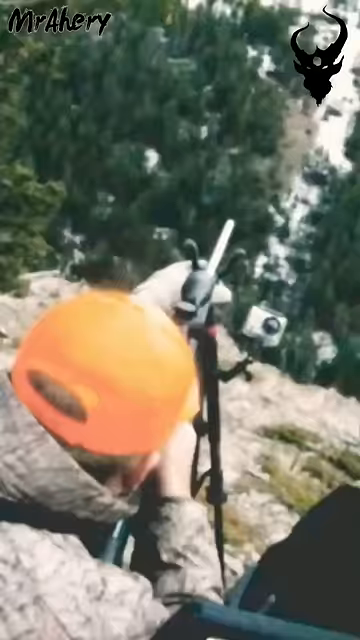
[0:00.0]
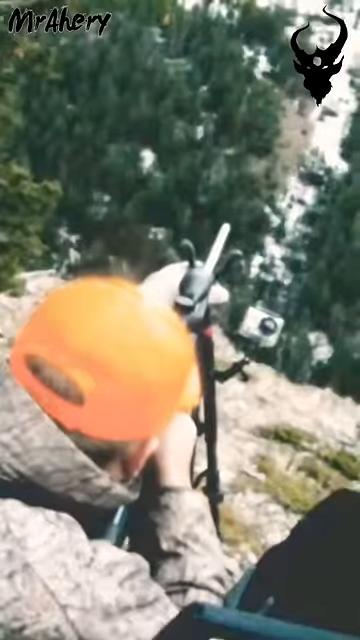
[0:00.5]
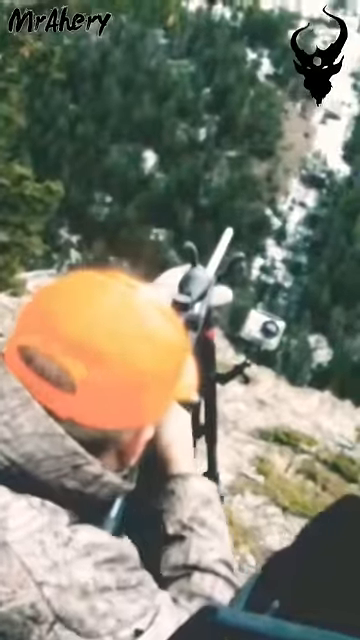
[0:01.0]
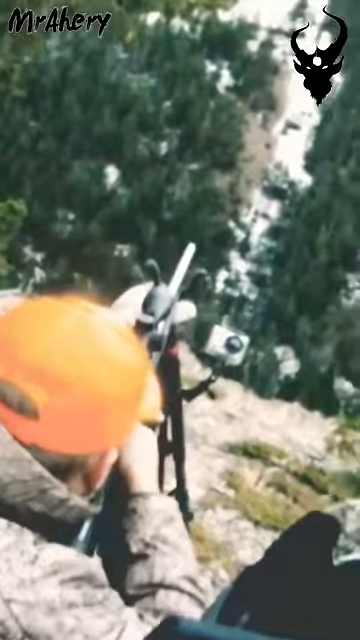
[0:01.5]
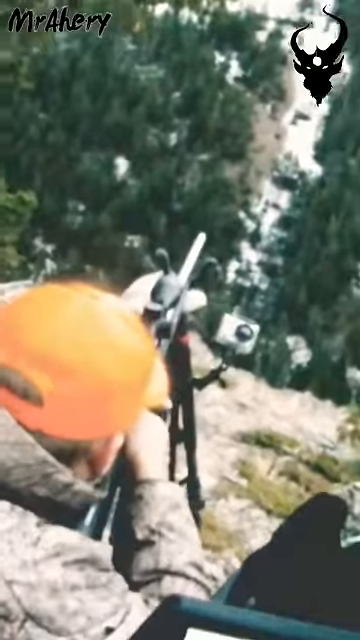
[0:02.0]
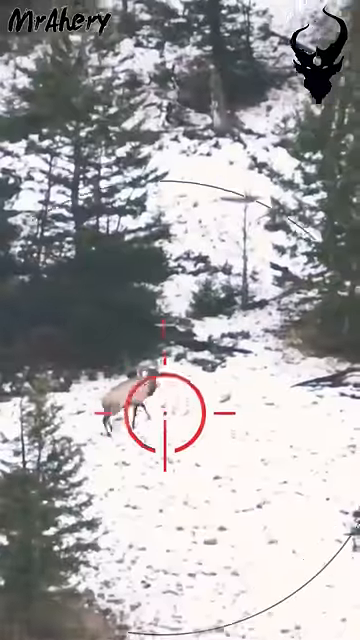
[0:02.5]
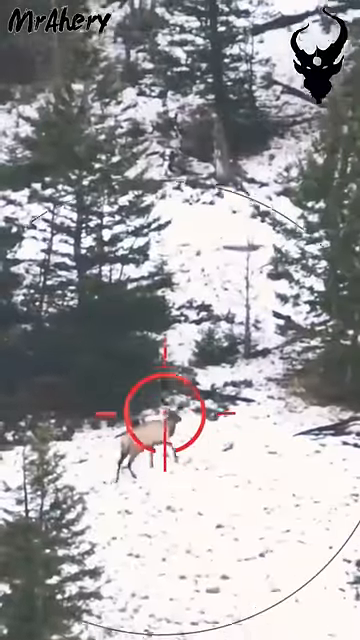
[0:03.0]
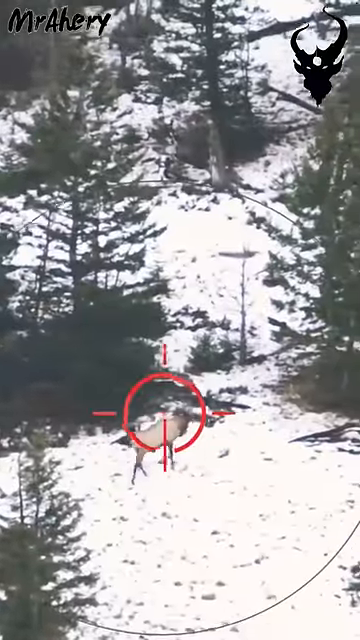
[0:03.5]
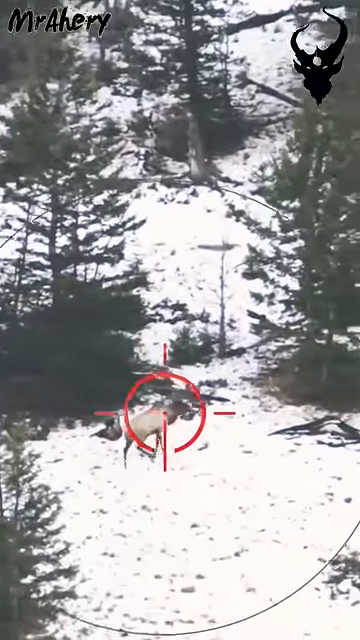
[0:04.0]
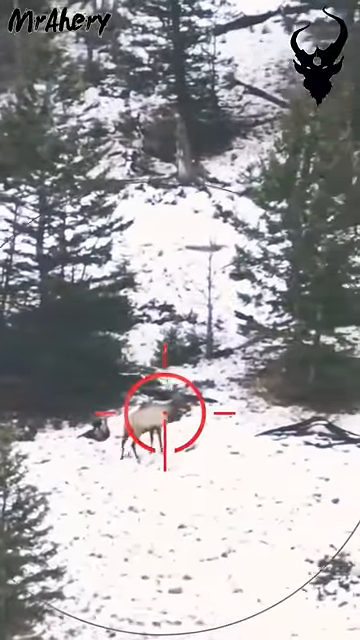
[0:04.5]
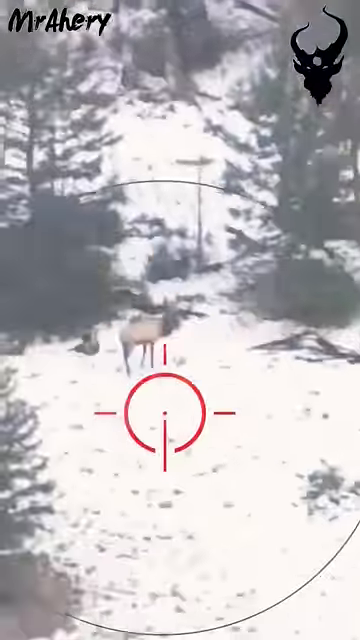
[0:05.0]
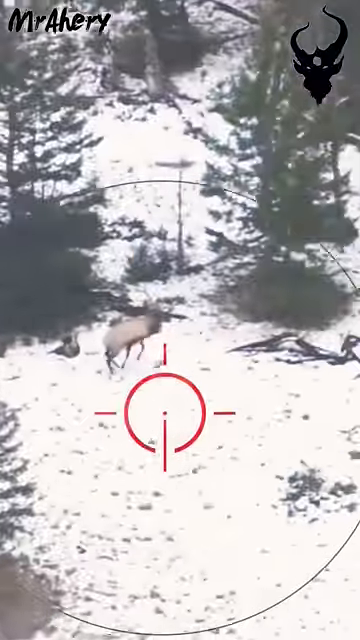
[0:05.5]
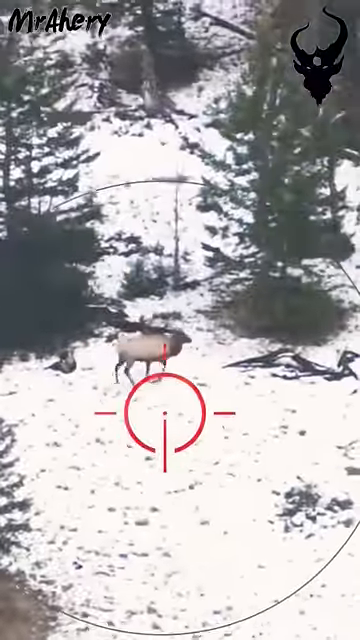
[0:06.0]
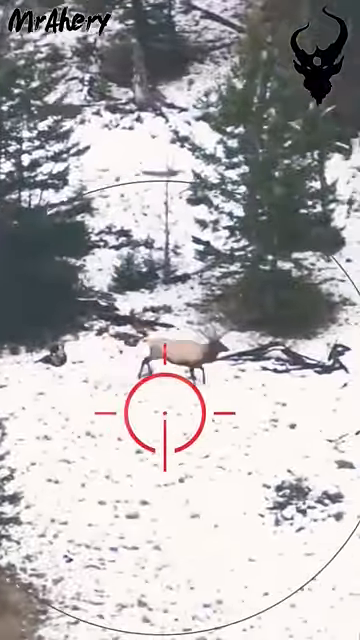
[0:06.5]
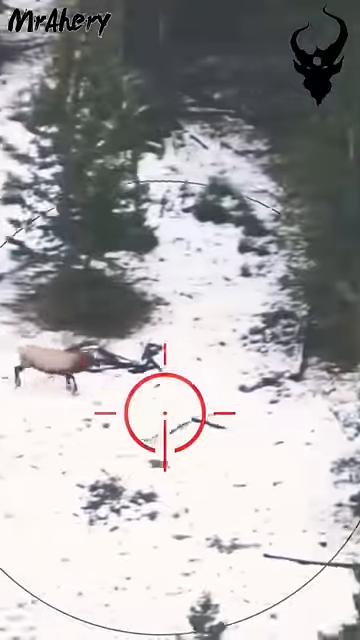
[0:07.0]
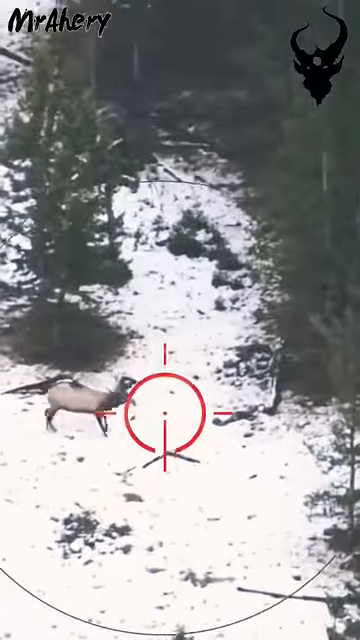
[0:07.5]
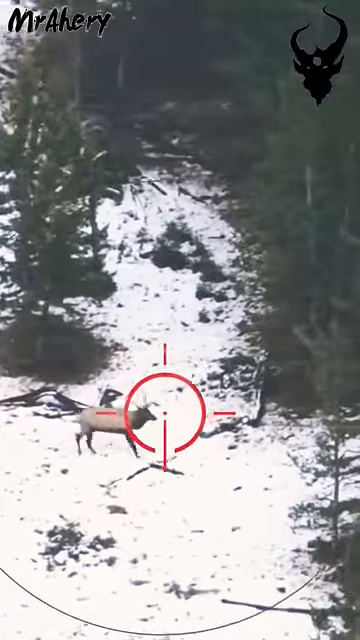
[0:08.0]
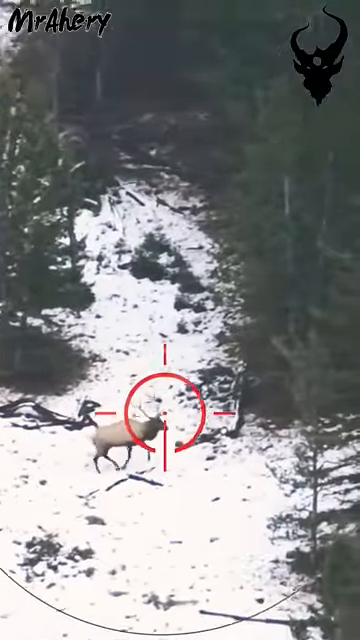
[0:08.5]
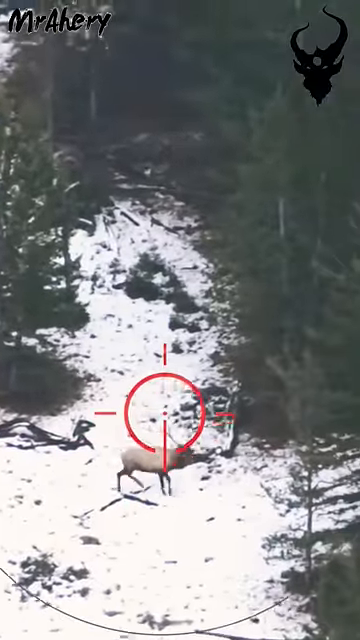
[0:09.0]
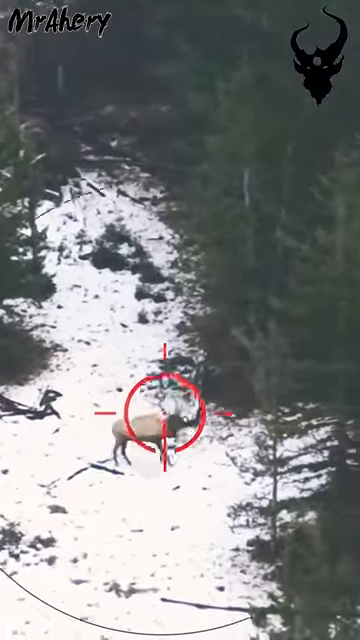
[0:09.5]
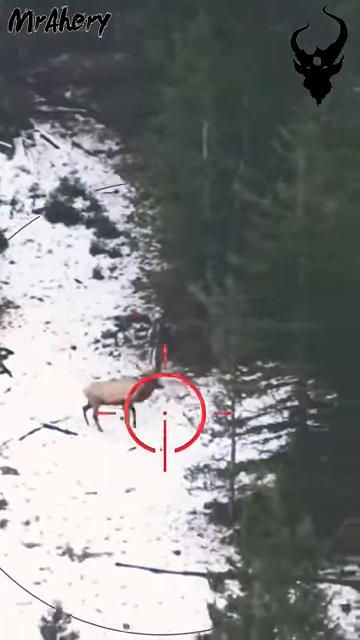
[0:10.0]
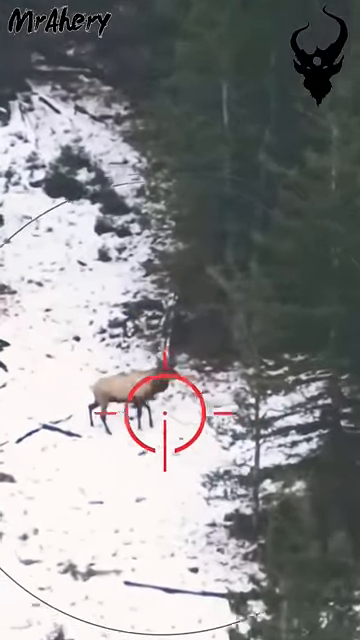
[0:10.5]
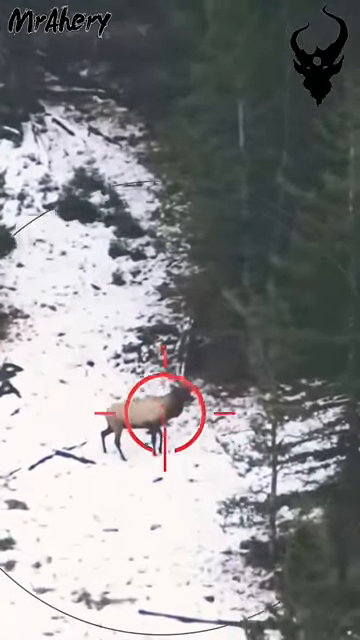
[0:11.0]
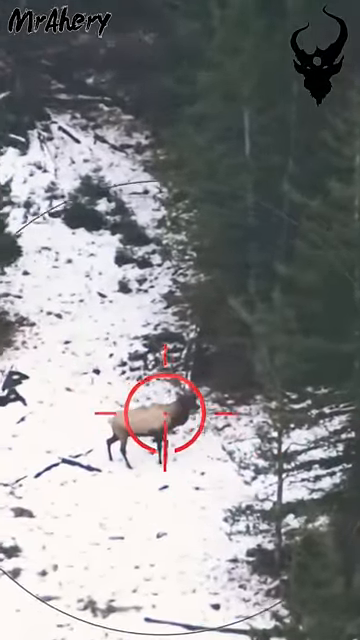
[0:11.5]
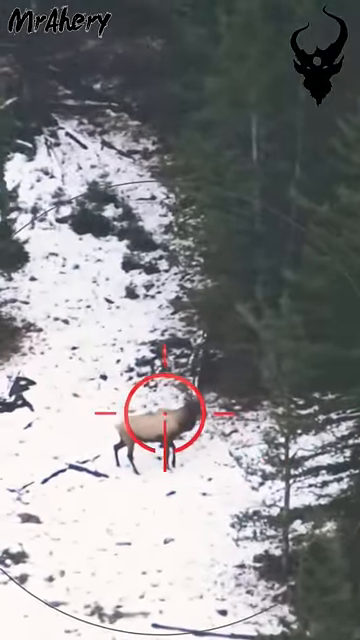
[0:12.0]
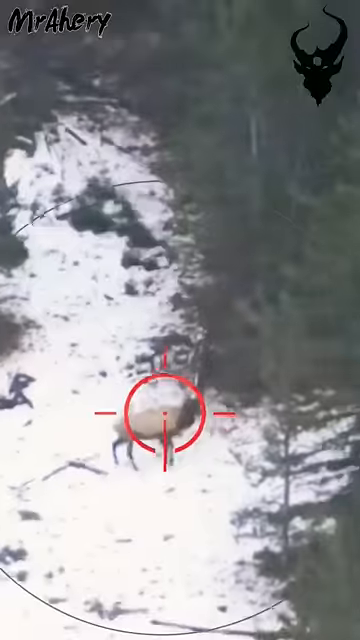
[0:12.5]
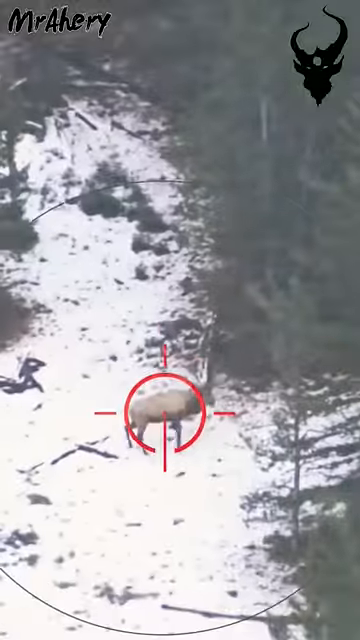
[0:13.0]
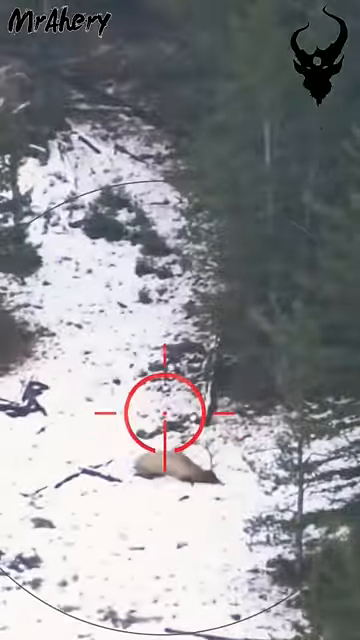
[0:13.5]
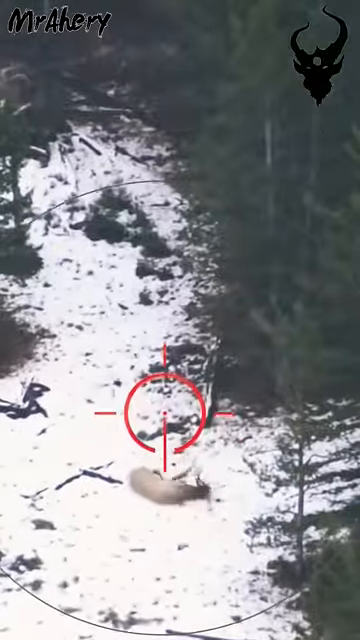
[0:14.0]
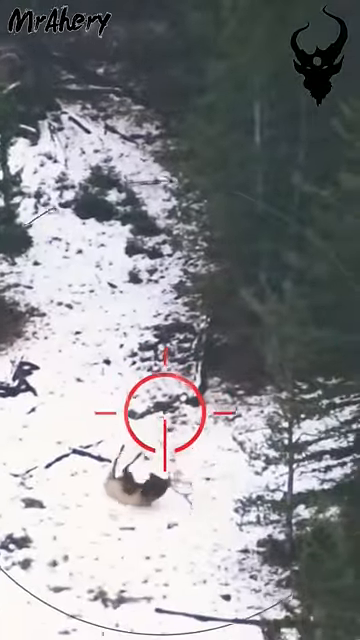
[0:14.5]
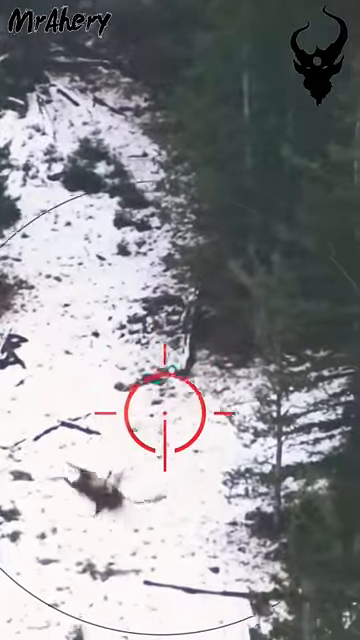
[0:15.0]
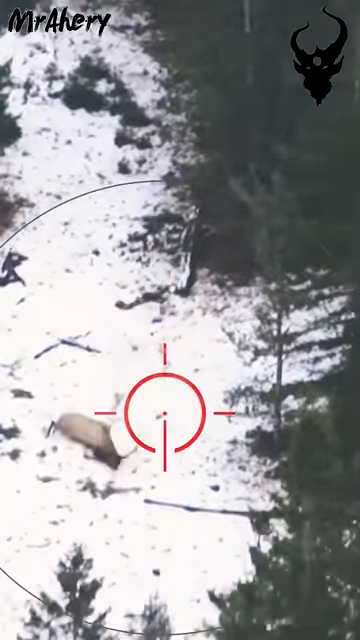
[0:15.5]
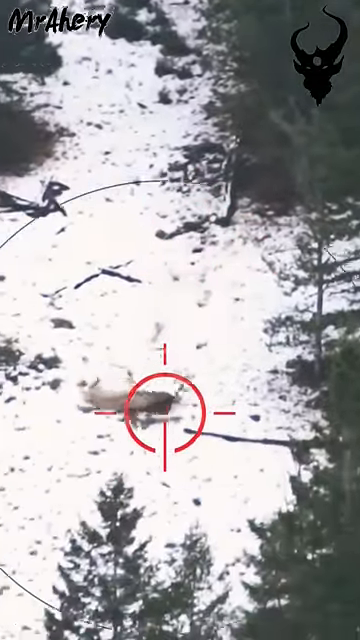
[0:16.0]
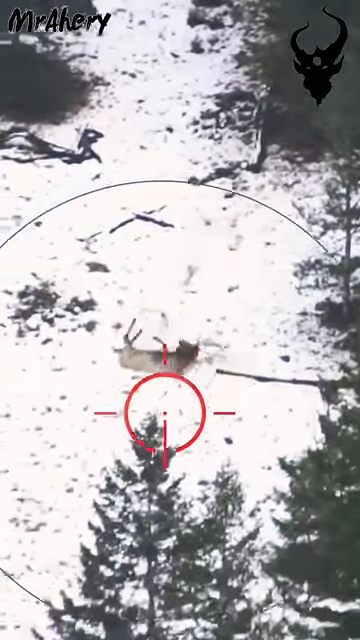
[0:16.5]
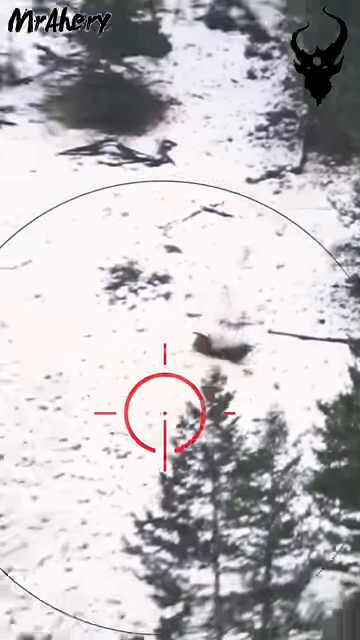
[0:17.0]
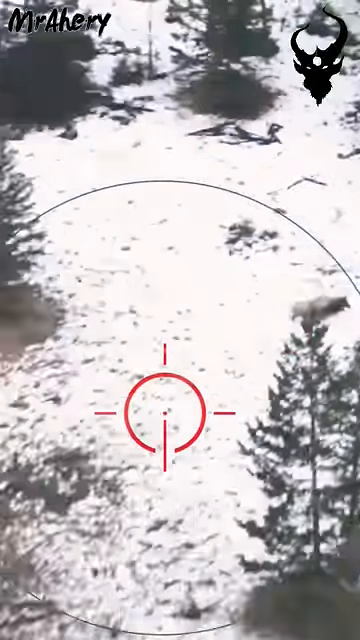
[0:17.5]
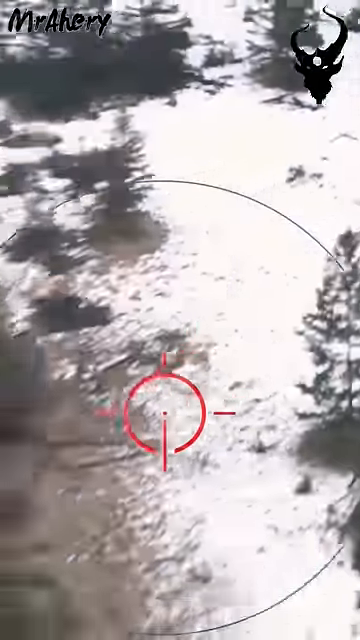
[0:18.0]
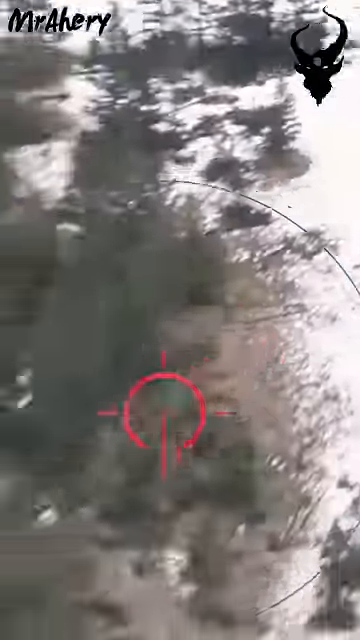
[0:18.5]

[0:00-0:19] The video, titled Hunting Big Buck Deer Scope Cam, shows a snowy setting with trees. A man wearing an orange hat and a brown jacket is hunting a buck. He shoots, and the deer runs, then stops and falls, tumbling down the side of a mountain. The deer has a really nice rack of horns. A red target is in the middle of the screen: a circle with four lines, including one line that runs all the way up through the middle and down to the outside, plus three lines outside the circle. Because of this target, the footage might be from a hunting video game.